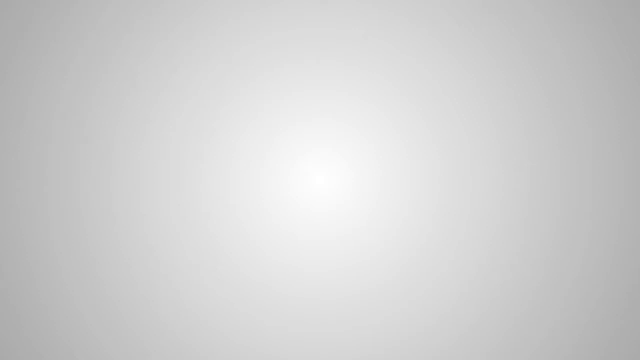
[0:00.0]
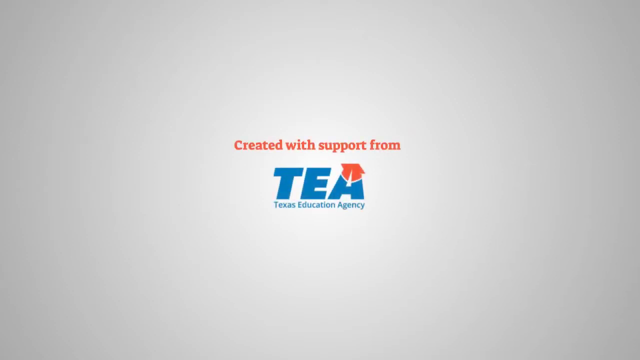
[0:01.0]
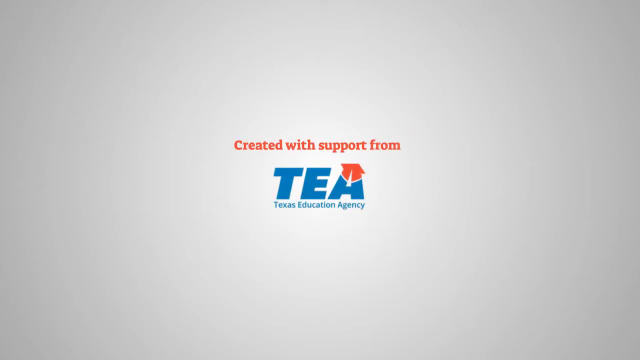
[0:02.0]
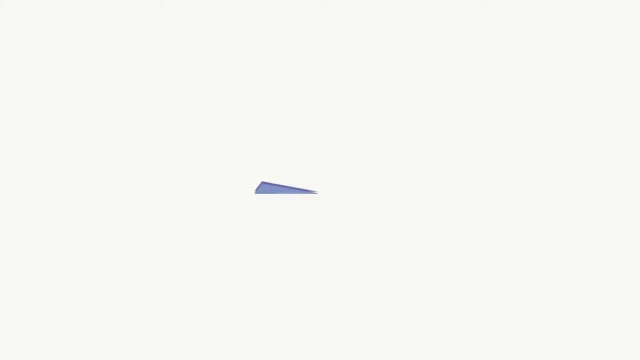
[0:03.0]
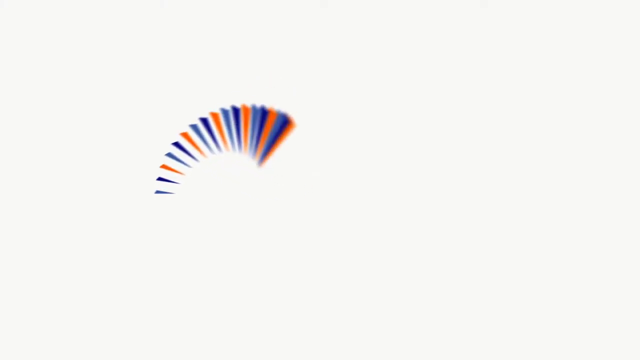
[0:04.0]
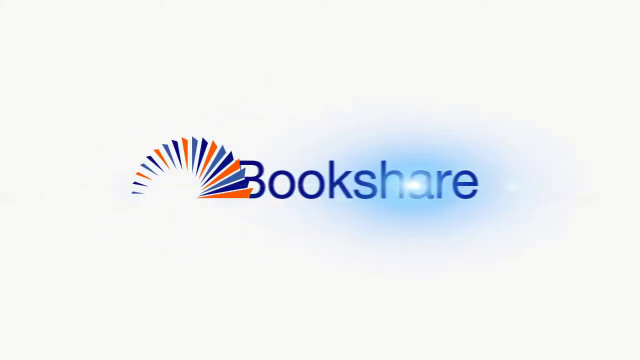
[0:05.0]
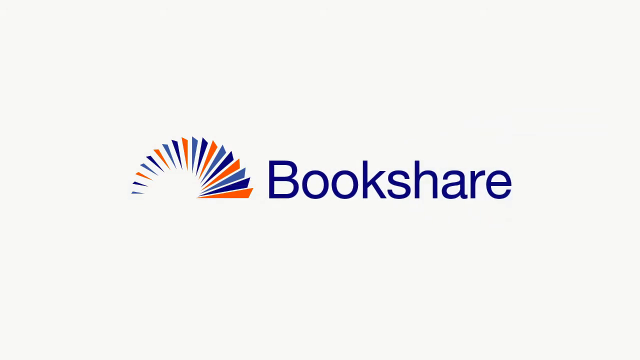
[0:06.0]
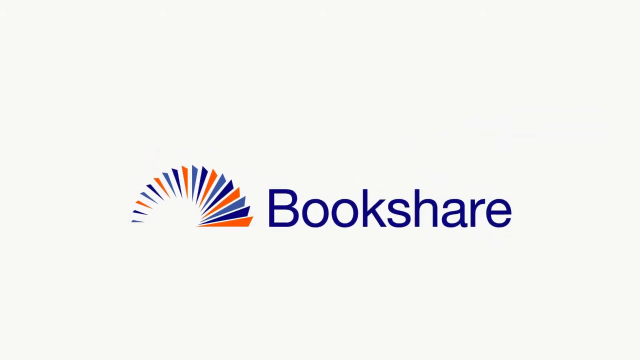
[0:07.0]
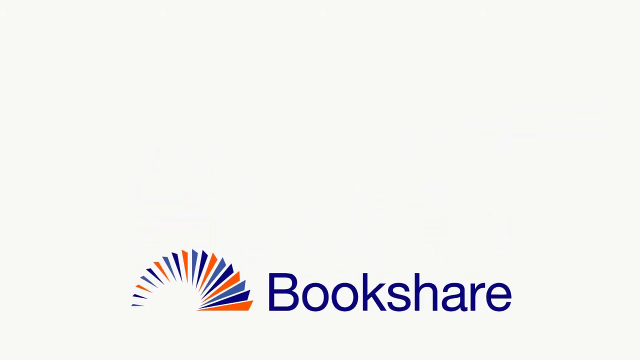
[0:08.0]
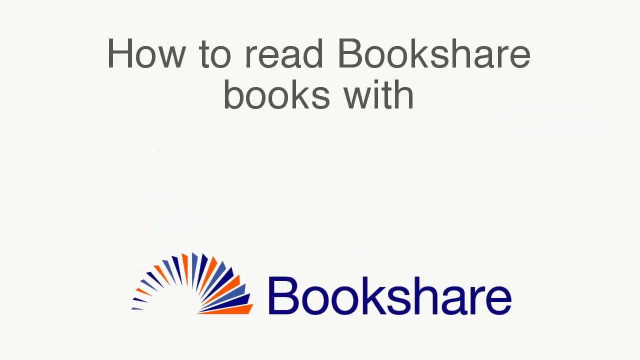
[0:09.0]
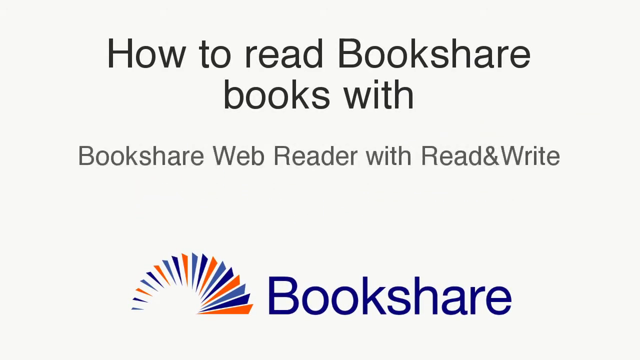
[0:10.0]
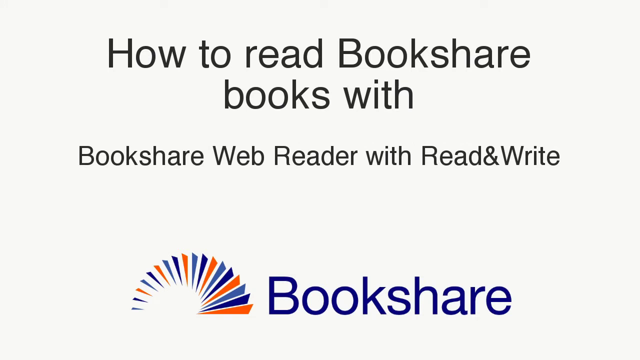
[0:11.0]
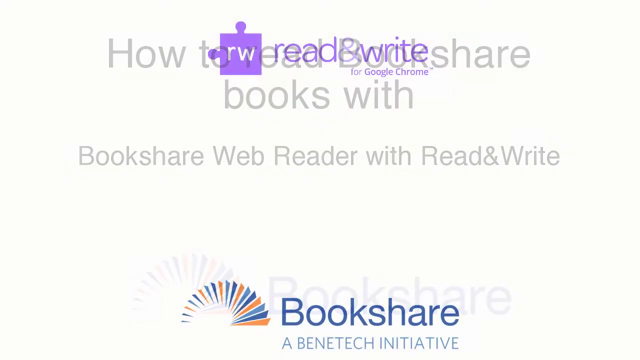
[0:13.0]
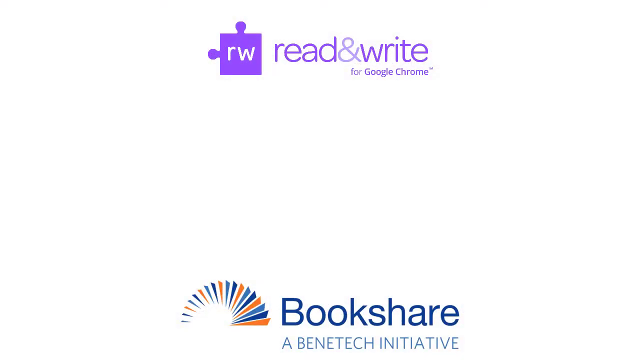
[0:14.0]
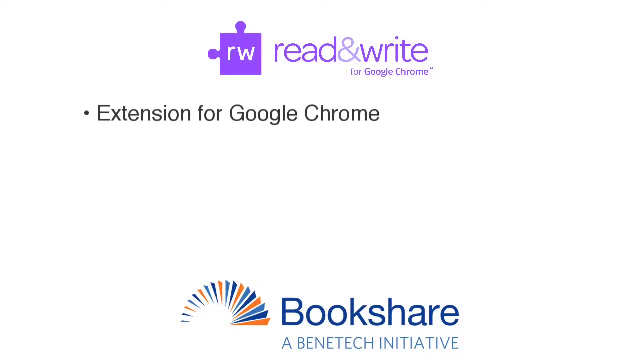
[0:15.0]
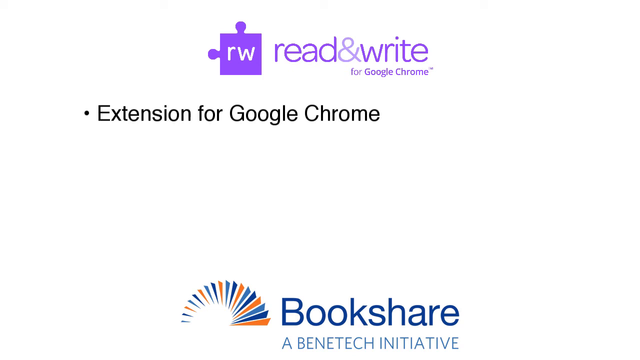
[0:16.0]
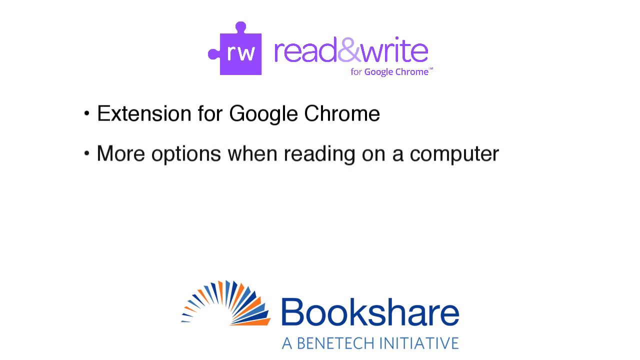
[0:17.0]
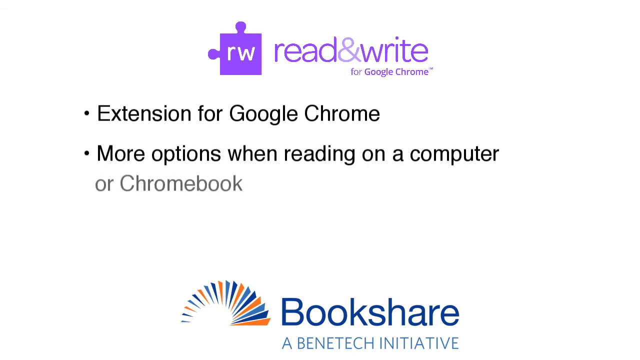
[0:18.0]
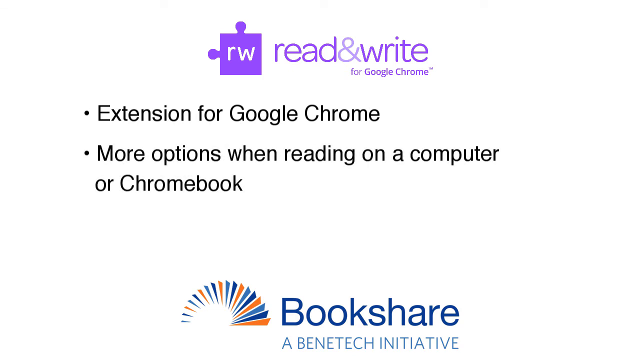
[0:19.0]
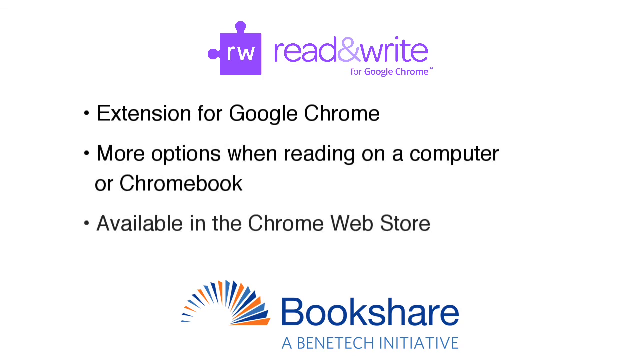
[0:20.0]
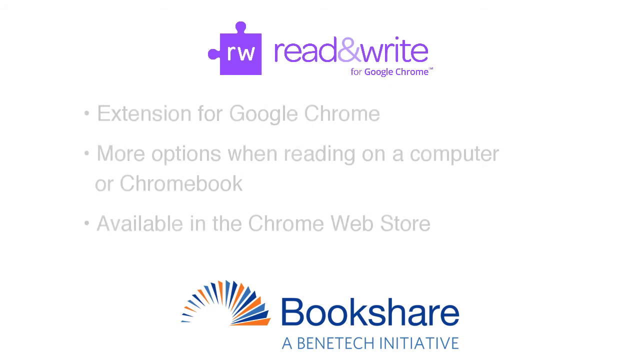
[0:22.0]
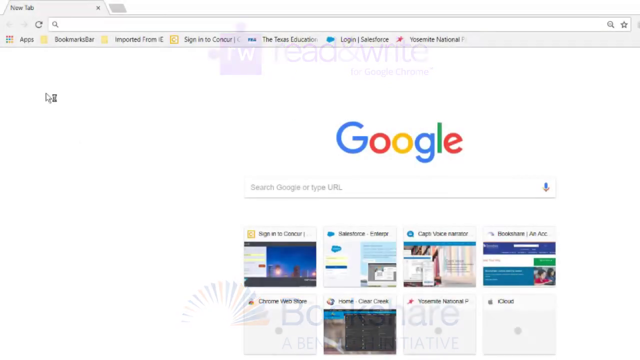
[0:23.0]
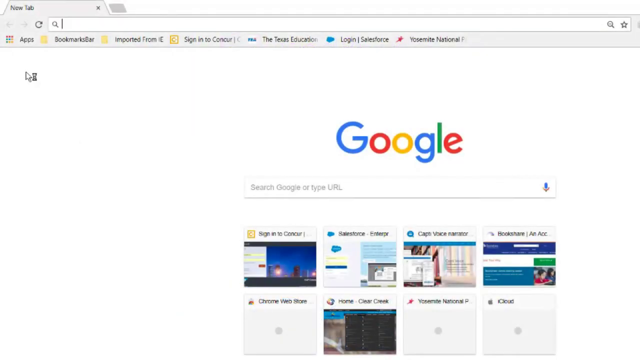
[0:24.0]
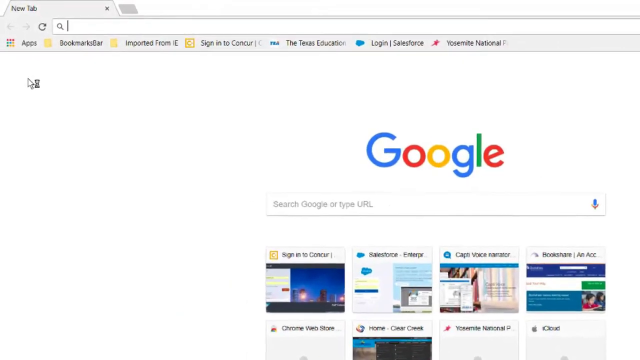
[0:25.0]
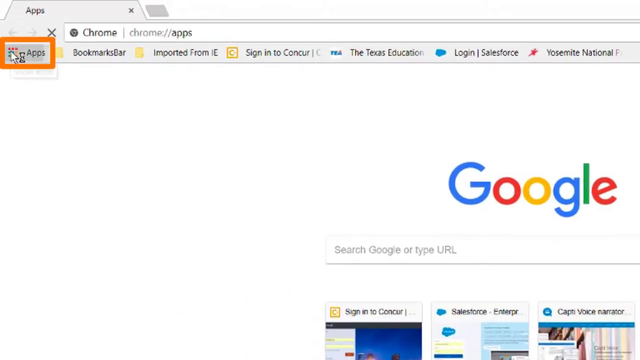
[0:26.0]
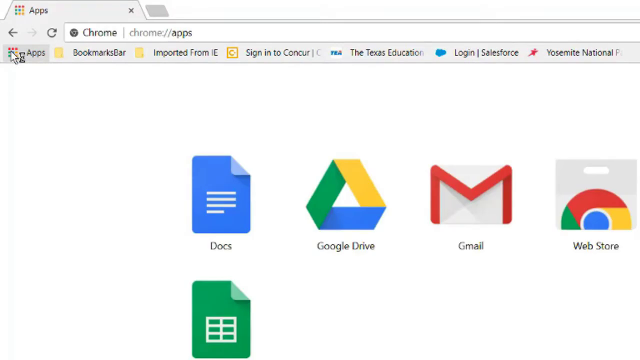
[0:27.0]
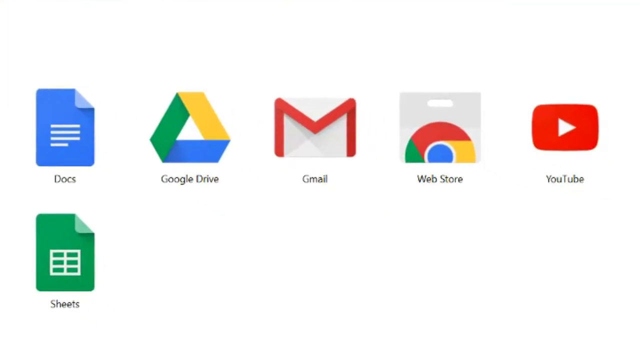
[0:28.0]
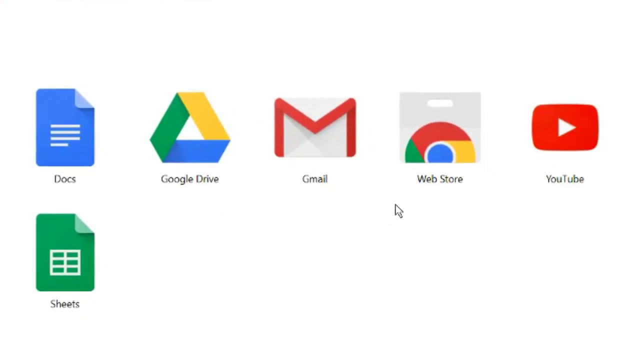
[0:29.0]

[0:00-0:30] The video opens on a screen with a white-to-gray gradient. A splash logo appears reading "Created with support from" followed by "TEA" and "Texas Education Agency." The words "Created with support" are orange, "TEA" is blue with orange at the top of the A, and "Texas Education Agency" is light blue. It transitions to another splash screen showing "Bookshare" in dark blue alongside the Bookshare logo in blue and orange. That splash screen slowly transitions to the bottom of the screen, and the text "How to Read Bookshare Books with Bookshare Web Reader with Read and Write" appears at the top of the screen in black font, then disappears. A new purple splash logo appears at the top of the screen, showing "RW" inside a puzzle piece with the text "read and write for Google Chrome" in purple beside it. Bulleted text then appears: "extension for Google Chrome," "more options when reading on a computer for Chromebook," and "available in the Chrome web store." The scene transitions to a Google Chrome web browser with the Google logo in the middle of the screen and several previously viewed webpages below it, apparently someone's Google homepage. The user highlights the Apps button in the top left, then clicks it to open their Google Apps.